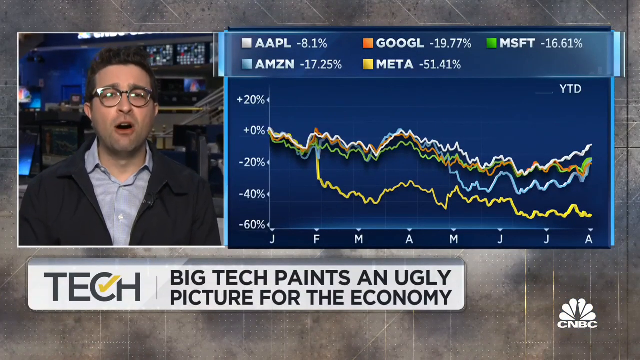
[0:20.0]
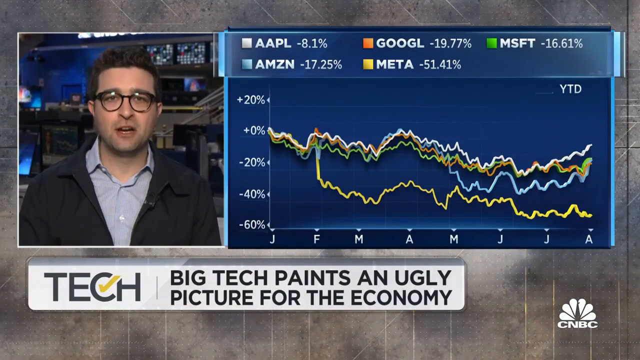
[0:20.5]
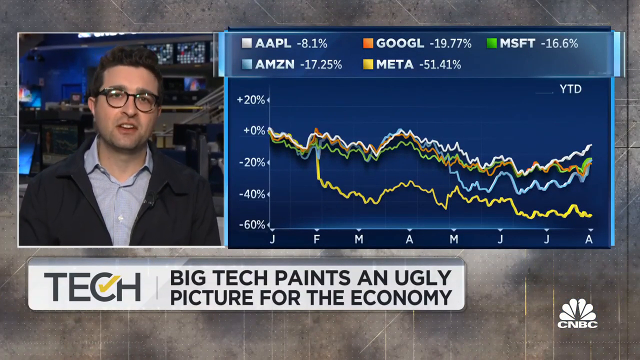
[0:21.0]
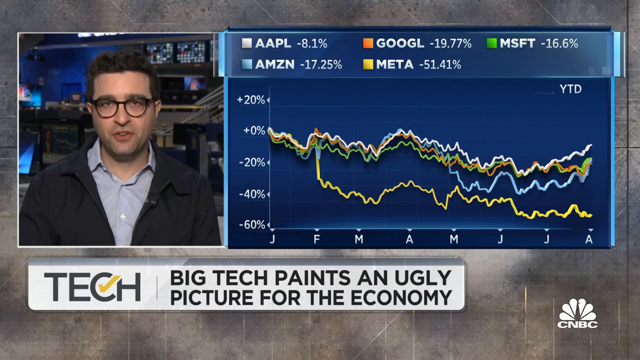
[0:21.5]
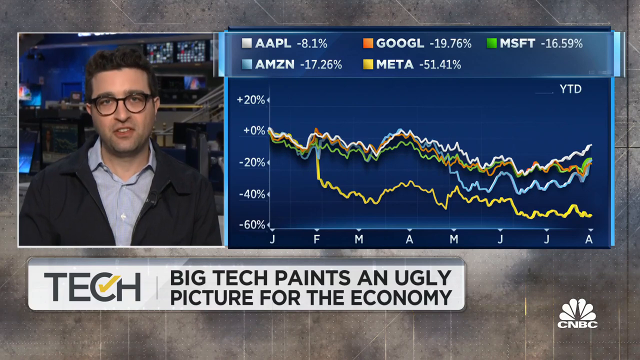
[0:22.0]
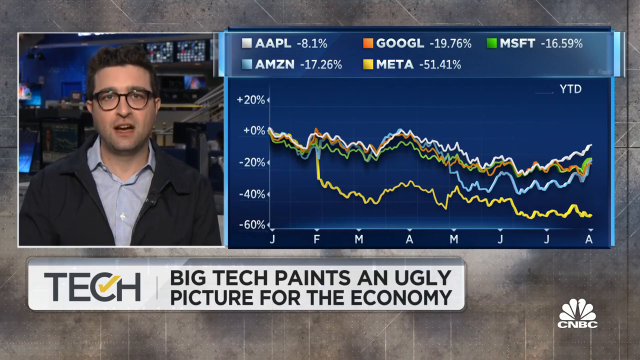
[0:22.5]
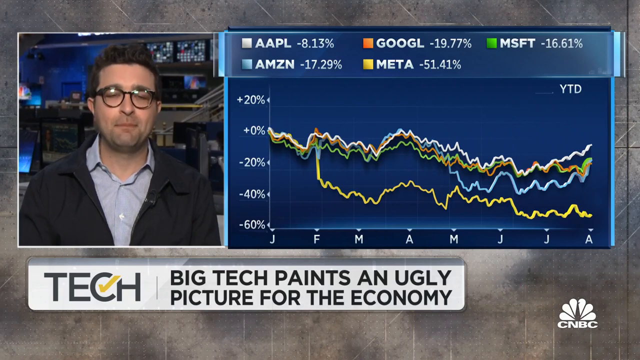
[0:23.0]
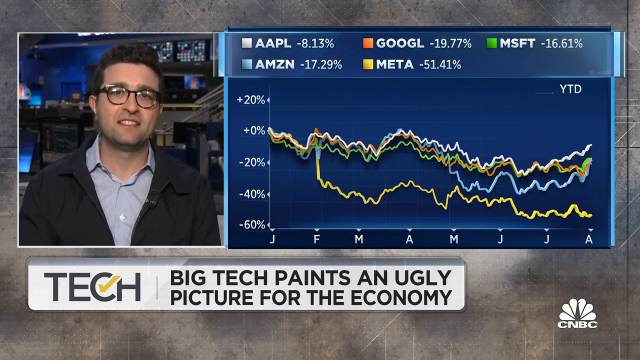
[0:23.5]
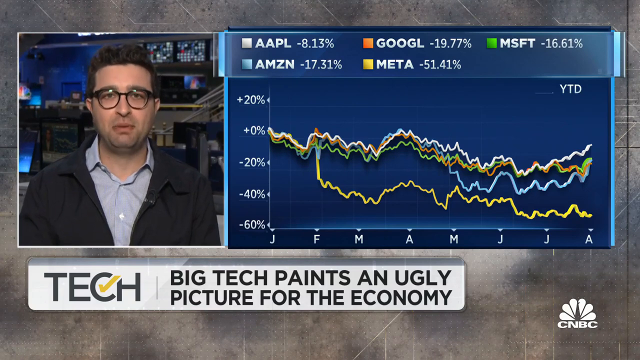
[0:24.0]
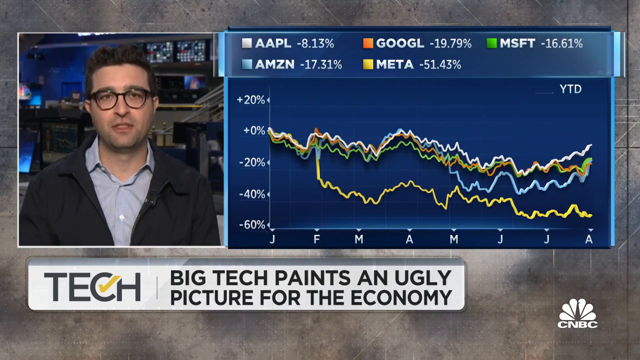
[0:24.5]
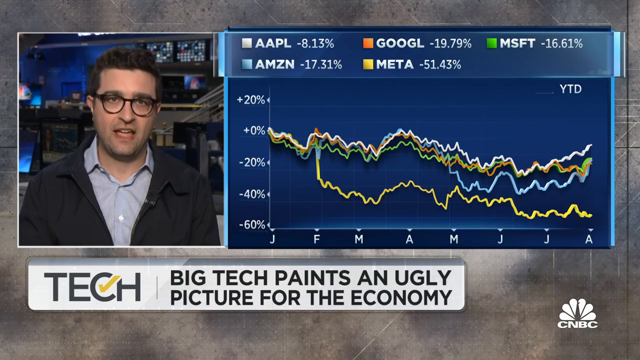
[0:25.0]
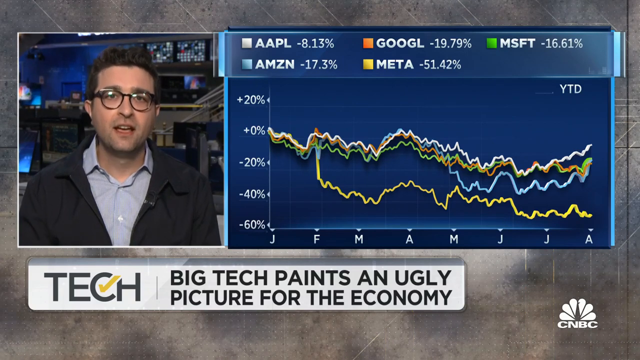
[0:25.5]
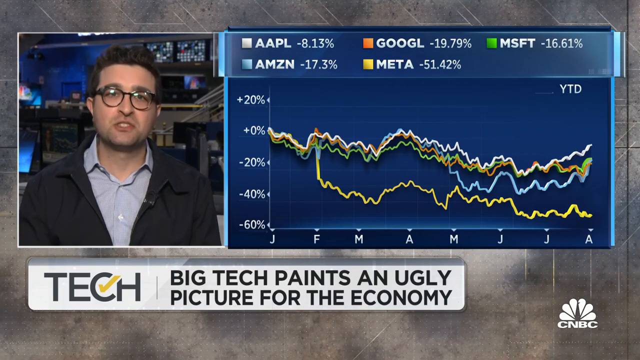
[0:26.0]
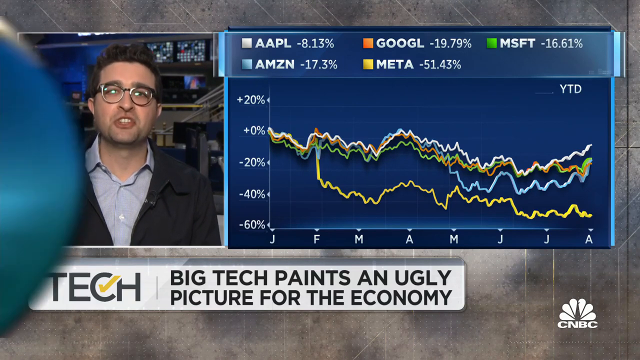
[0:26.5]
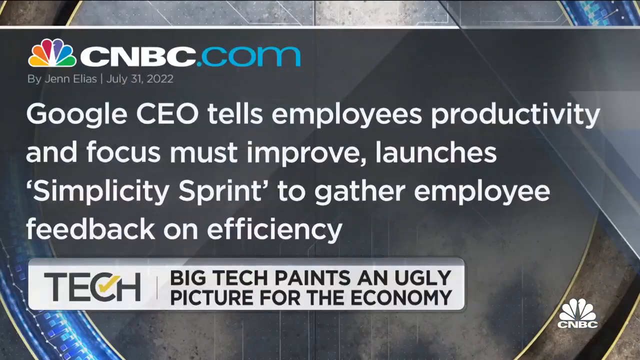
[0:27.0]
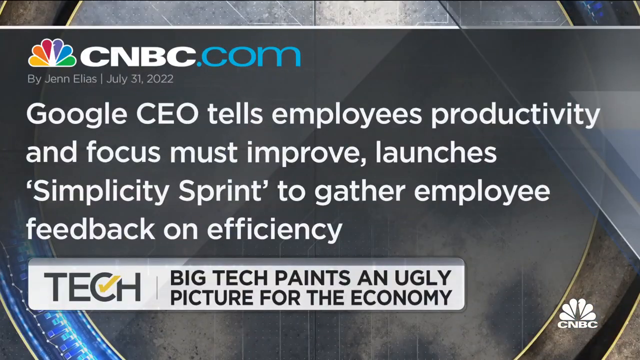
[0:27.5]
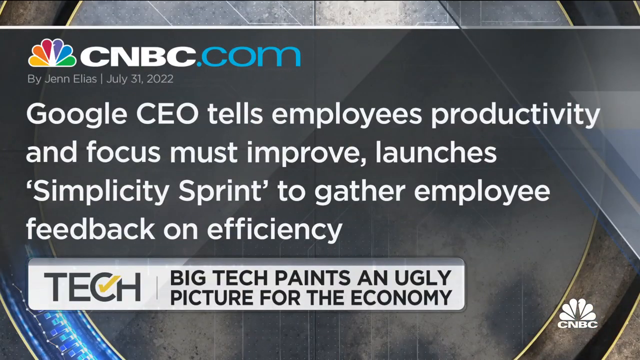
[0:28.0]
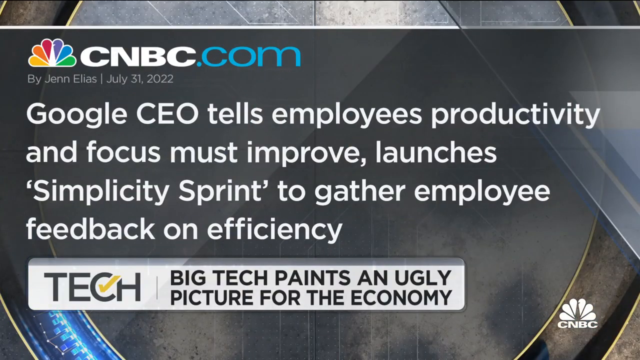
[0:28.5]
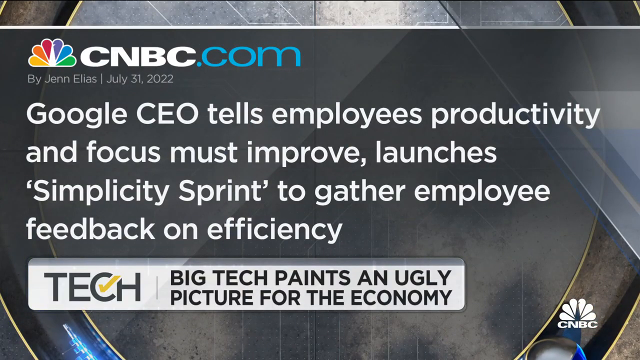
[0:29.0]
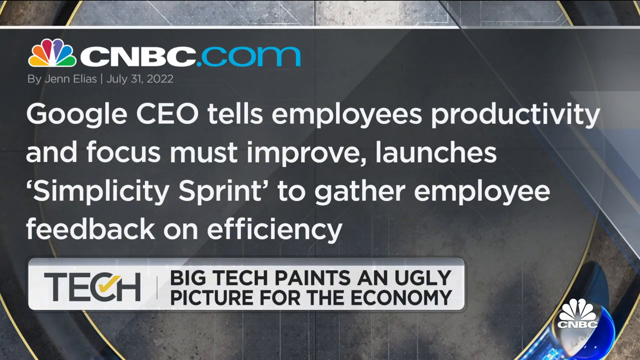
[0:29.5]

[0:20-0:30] In this CNBC news report, a Caucasian male correspondent reports on big tech painting an ugly picture for the economy. The CNBC logo is in the lower right-hand part of the screen. A line graph appears along with a legend listing several companies and abbreviations, including Apple, Amazon, Google, and Meta. As the correspondent speaks, a quote appears: "Google CEO tells employees productivity and focus must improve. Launches Simplicity Sprint to gather employee feedback on efficiency."